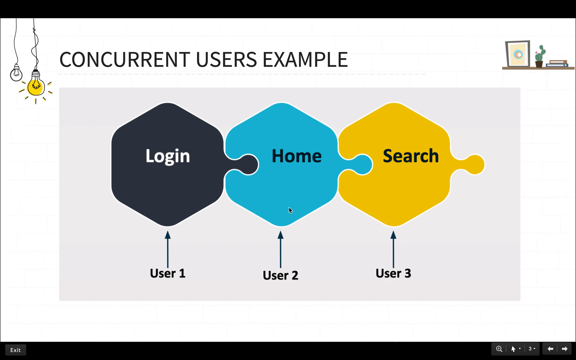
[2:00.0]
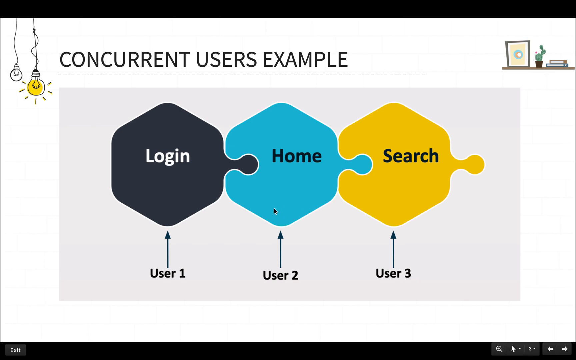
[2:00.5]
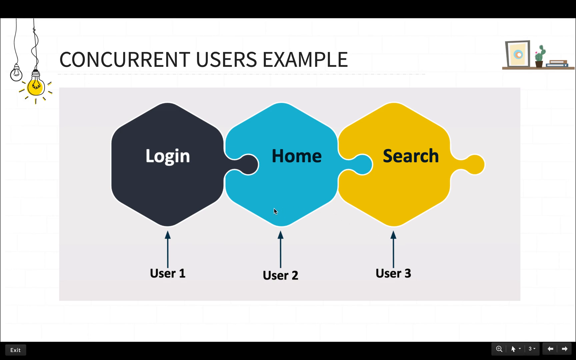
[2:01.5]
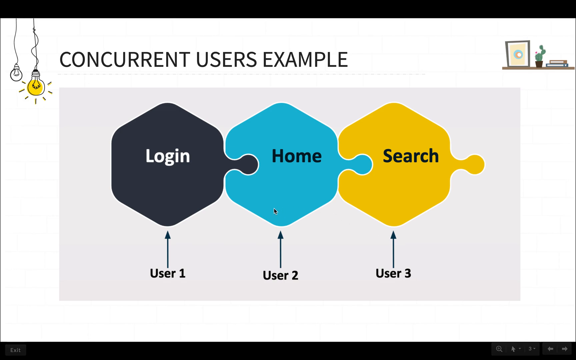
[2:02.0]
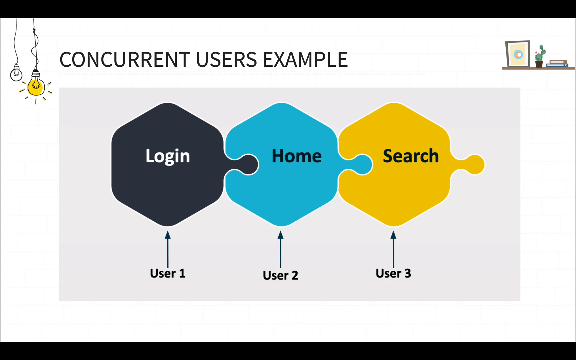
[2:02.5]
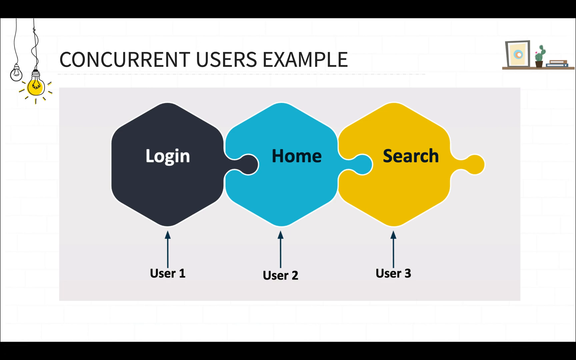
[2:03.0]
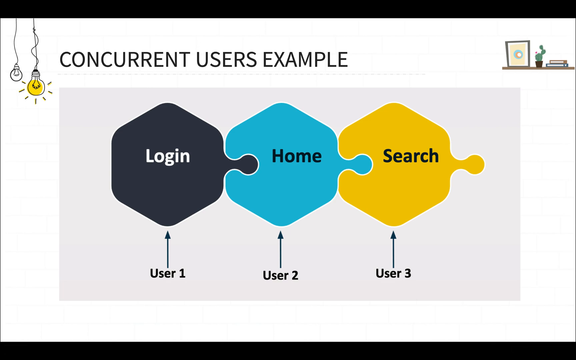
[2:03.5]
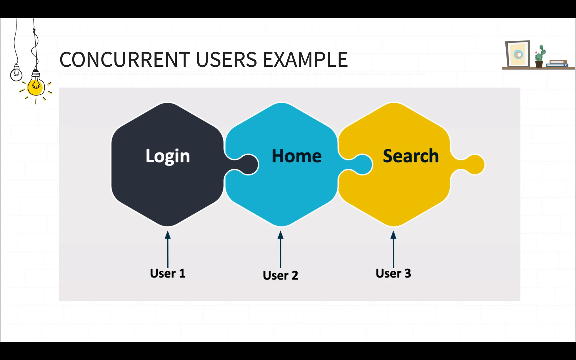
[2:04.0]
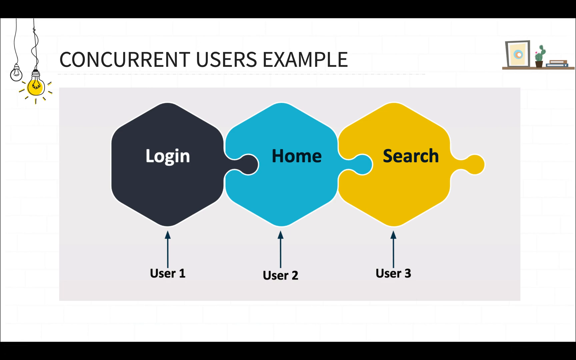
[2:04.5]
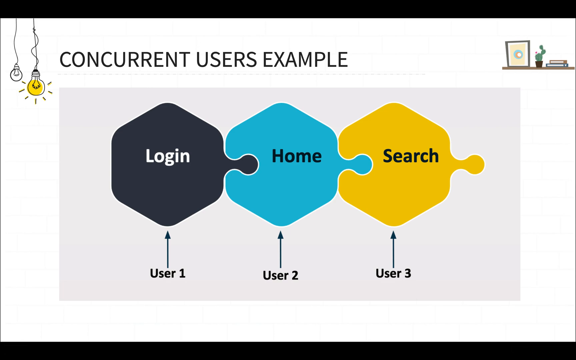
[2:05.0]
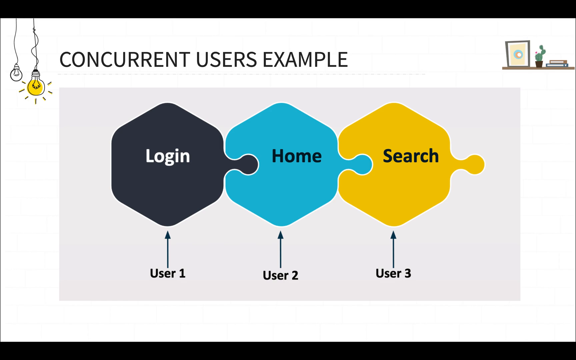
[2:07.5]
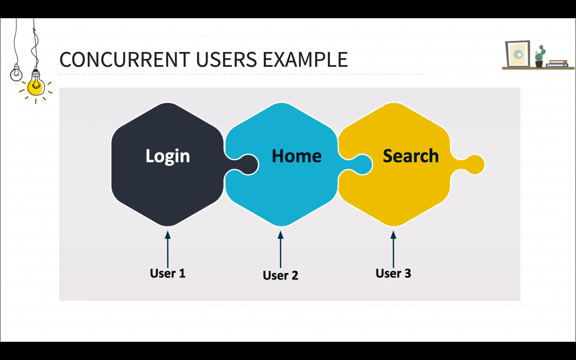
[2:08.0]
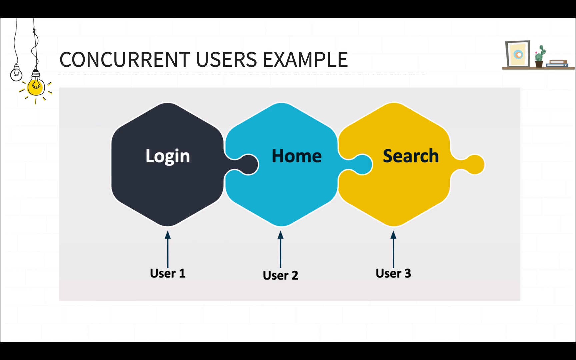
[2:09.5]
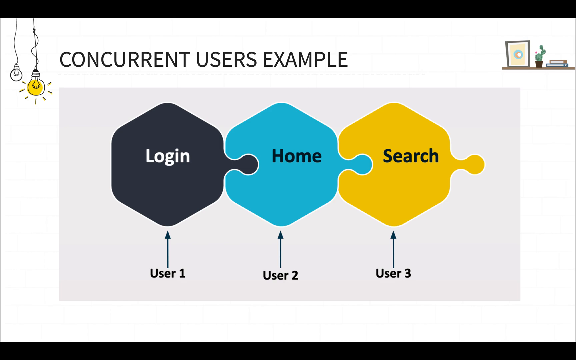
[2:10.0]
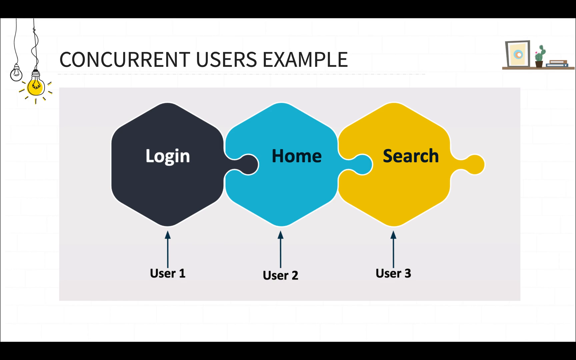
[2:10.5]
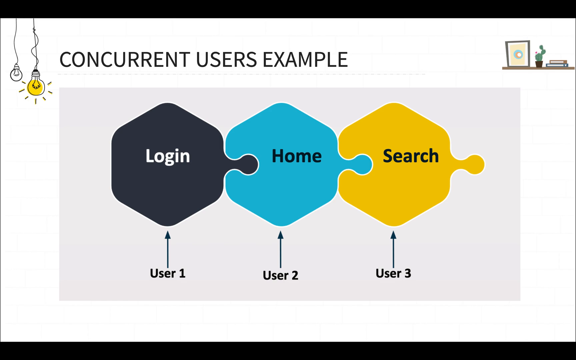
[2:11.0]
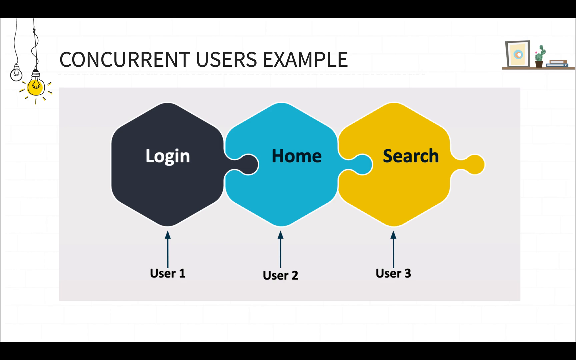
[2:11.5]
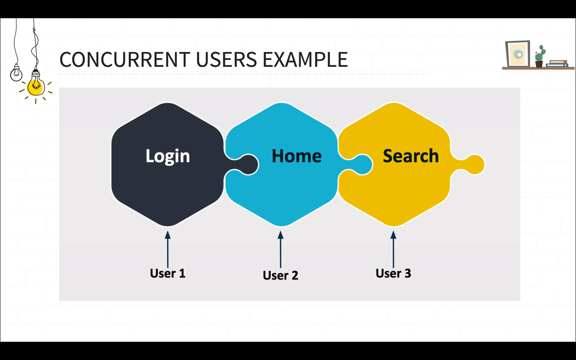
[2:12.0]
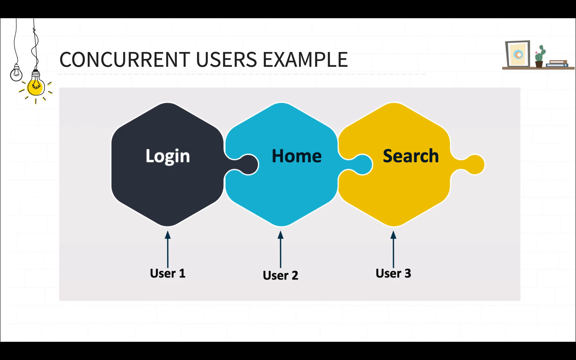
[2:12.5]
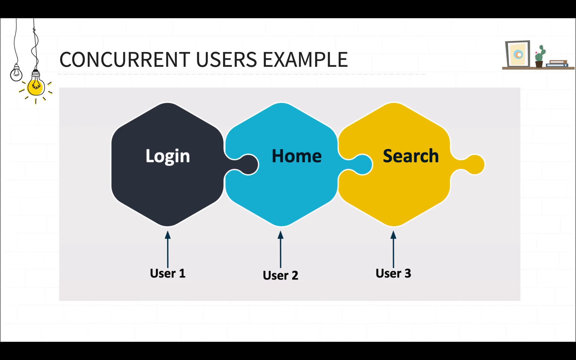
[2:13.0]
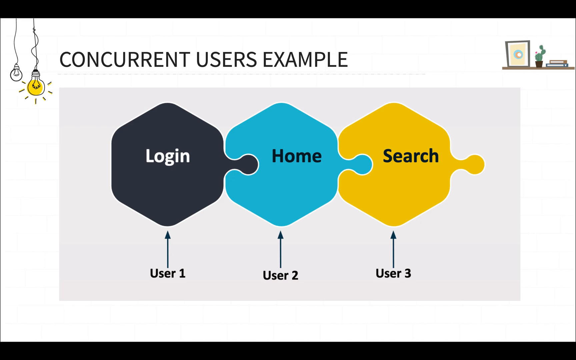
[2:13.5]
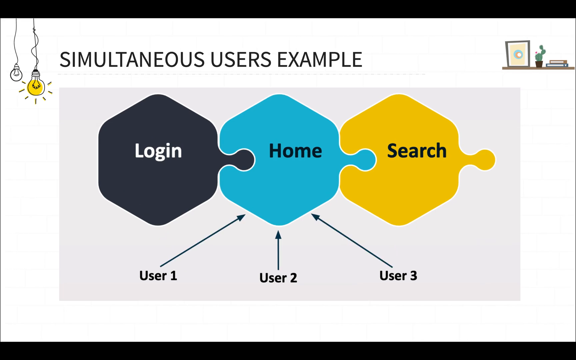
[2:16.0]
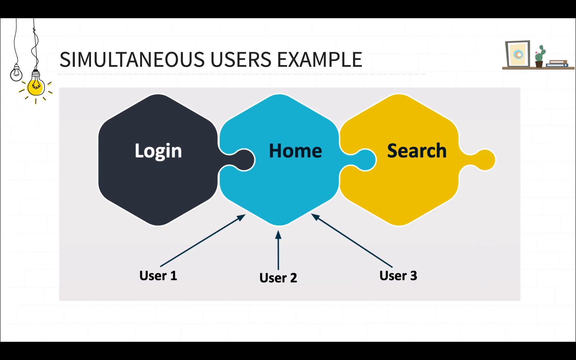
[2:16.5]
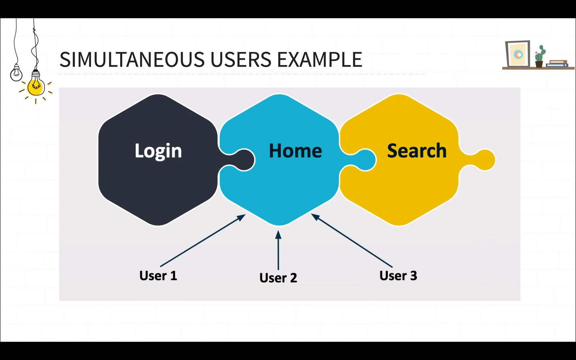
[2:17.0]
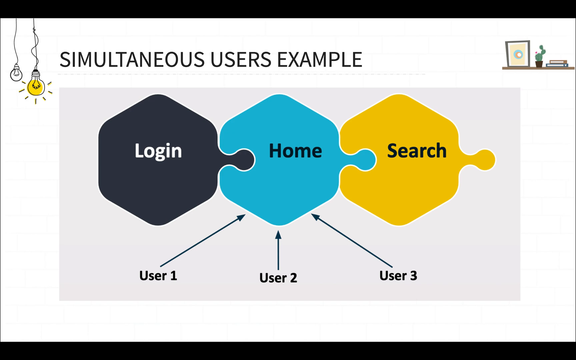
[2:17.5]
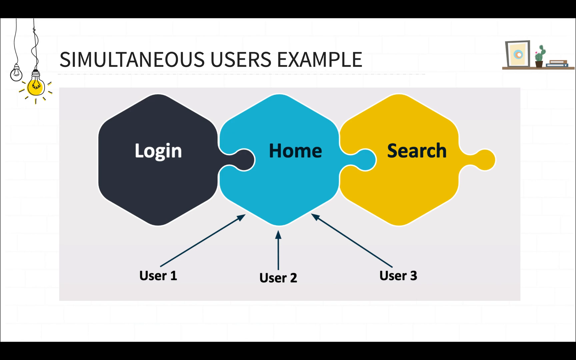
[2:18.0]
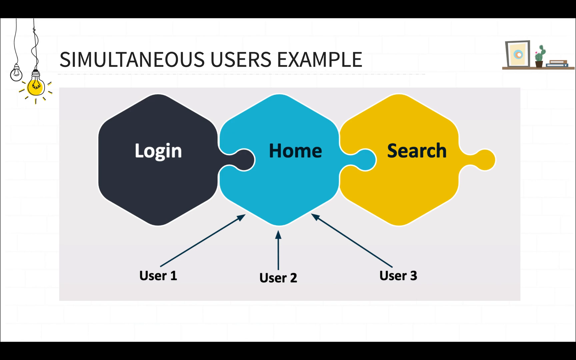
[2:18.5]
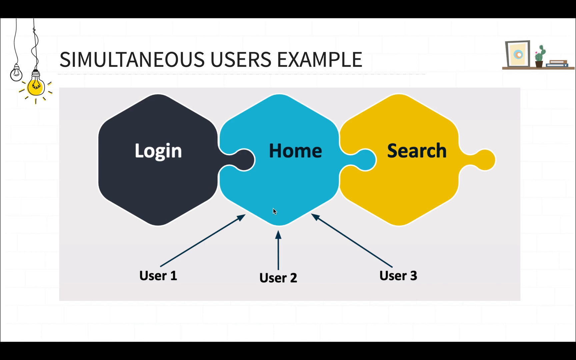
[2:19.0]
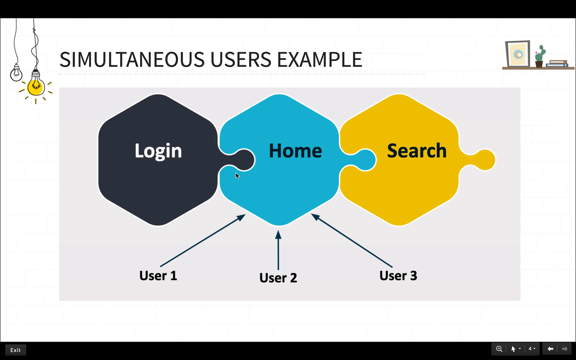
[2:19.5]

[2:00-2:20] The slide titled "concurrent users example" shows three puzzle pieces reading "login," "home" and "search," with each user on a different part of the website. The login piece is black with white letters, home is blue with black letters, and search is yellow with black letters. Then a simultaneous example shows user one, user two and user three all at home at the same time, with arrows all pointing over to home instead of up to login. The slide is white, with two light bulbs hanging down and a bookshelf on the right.